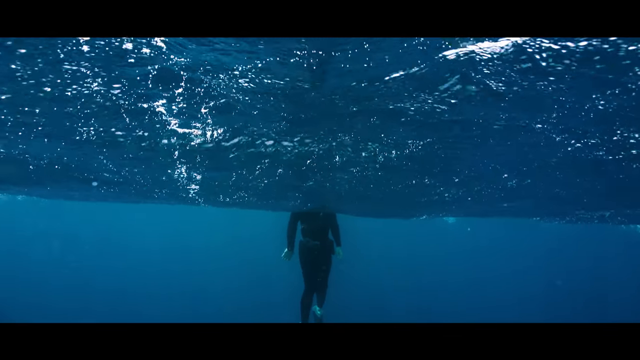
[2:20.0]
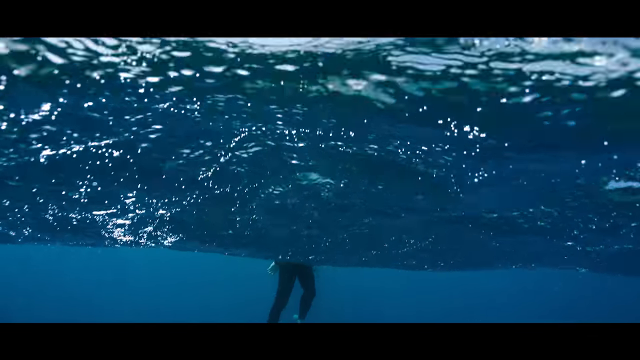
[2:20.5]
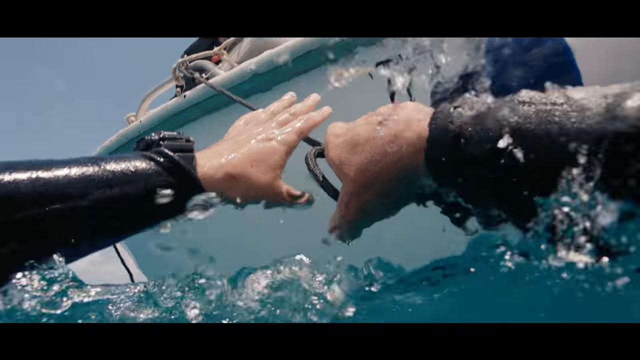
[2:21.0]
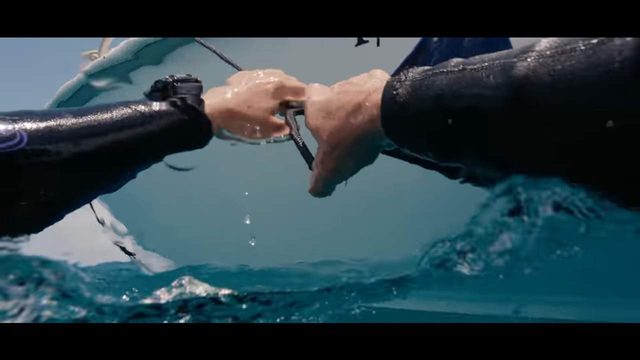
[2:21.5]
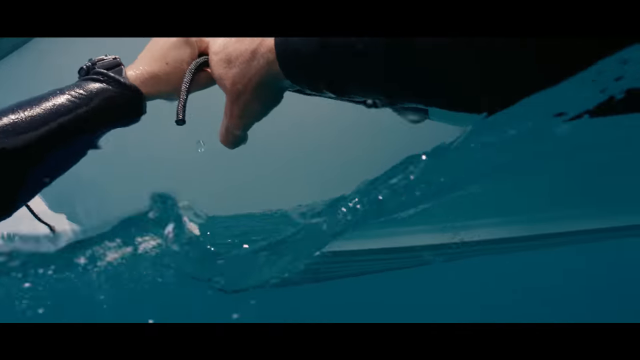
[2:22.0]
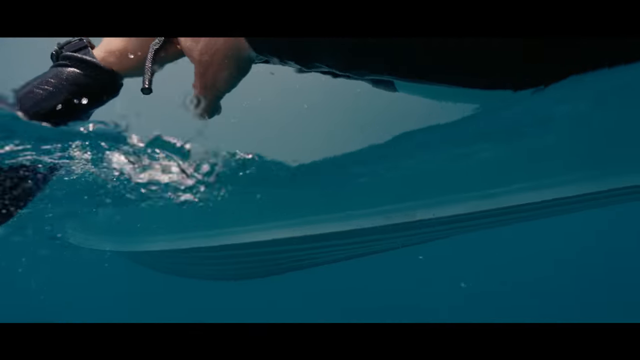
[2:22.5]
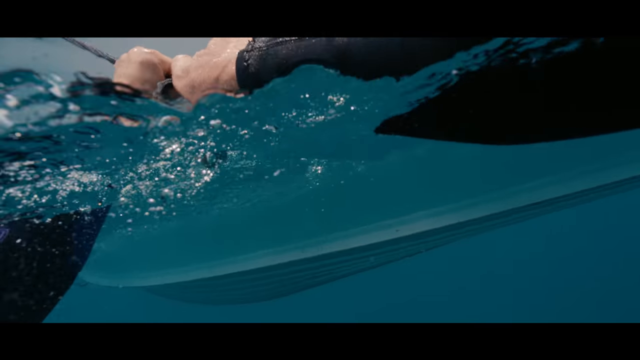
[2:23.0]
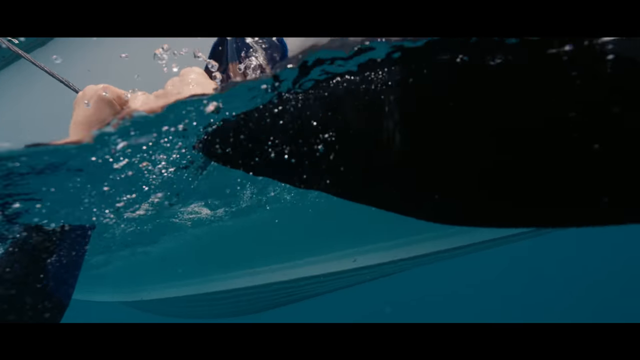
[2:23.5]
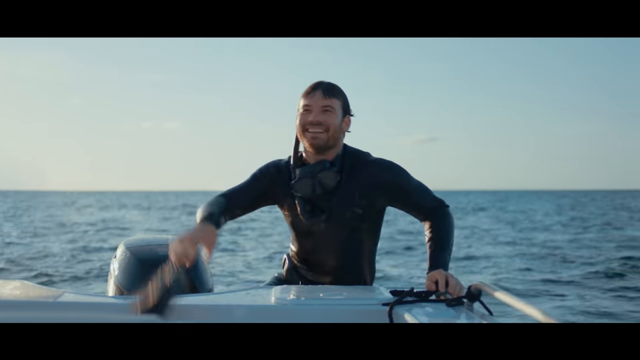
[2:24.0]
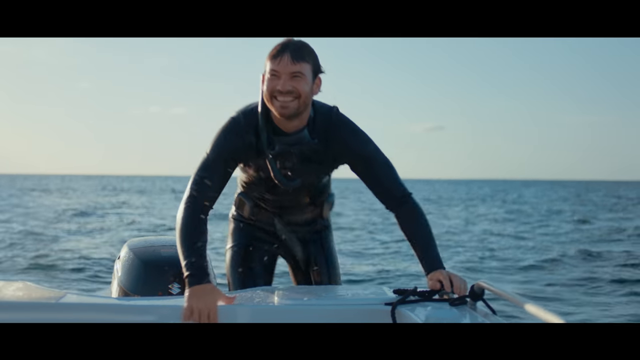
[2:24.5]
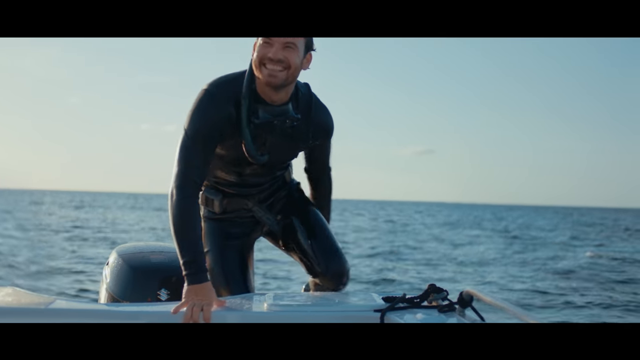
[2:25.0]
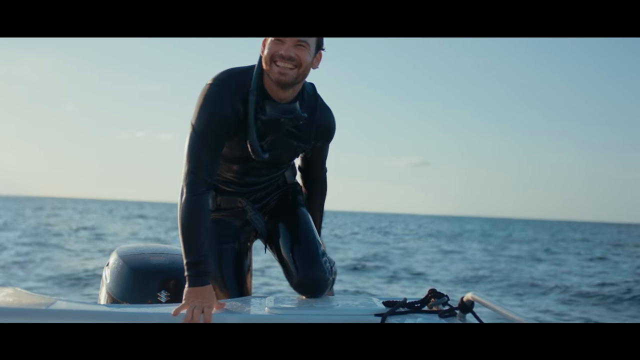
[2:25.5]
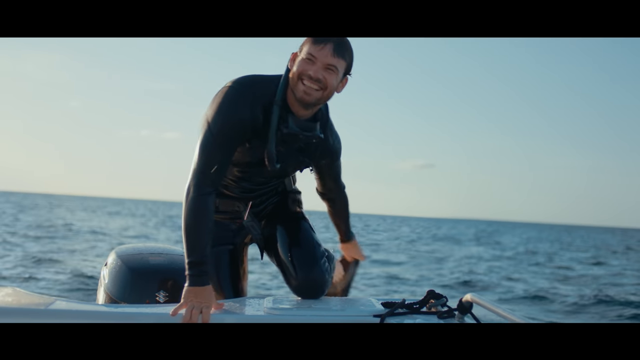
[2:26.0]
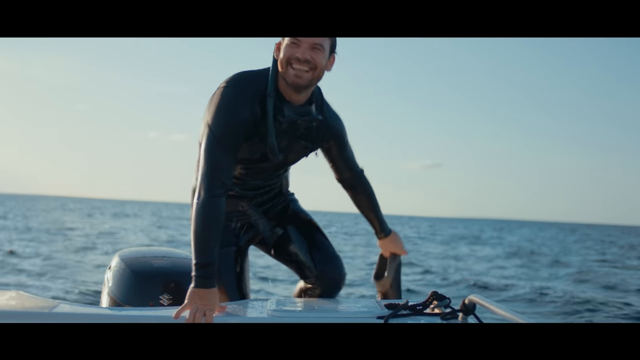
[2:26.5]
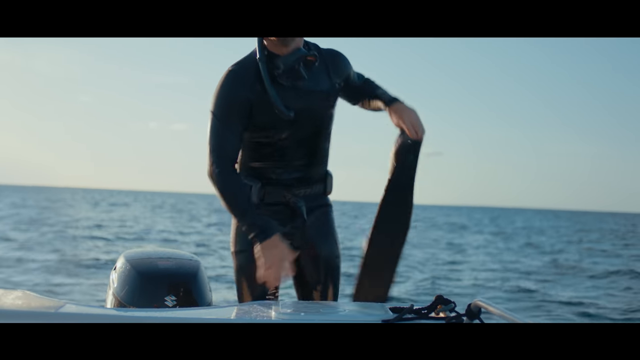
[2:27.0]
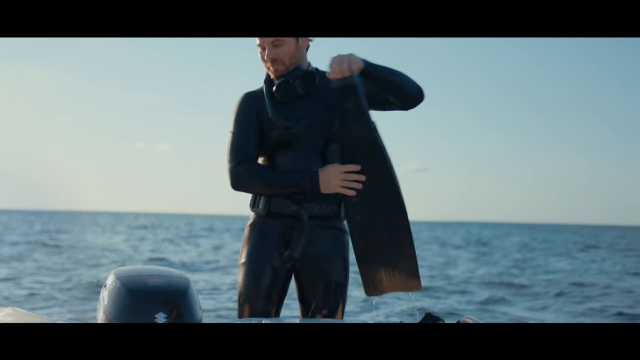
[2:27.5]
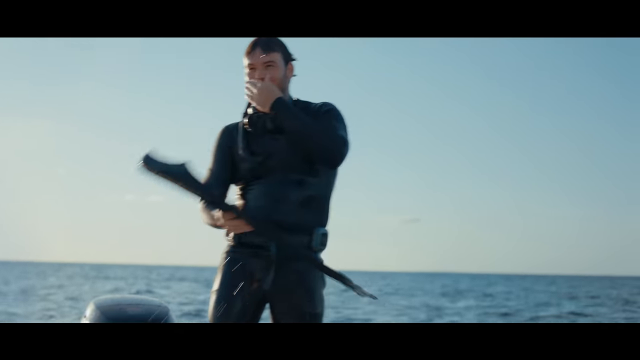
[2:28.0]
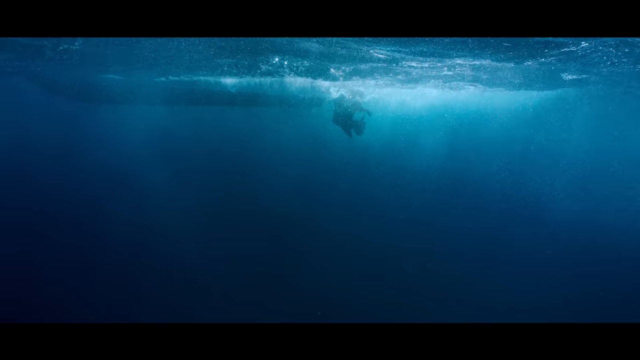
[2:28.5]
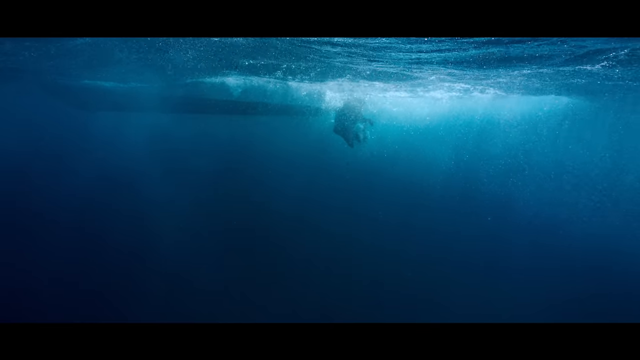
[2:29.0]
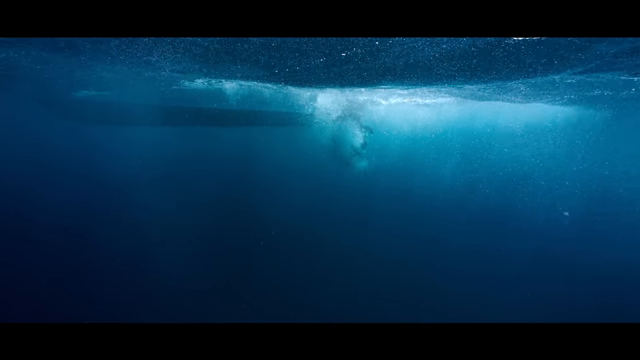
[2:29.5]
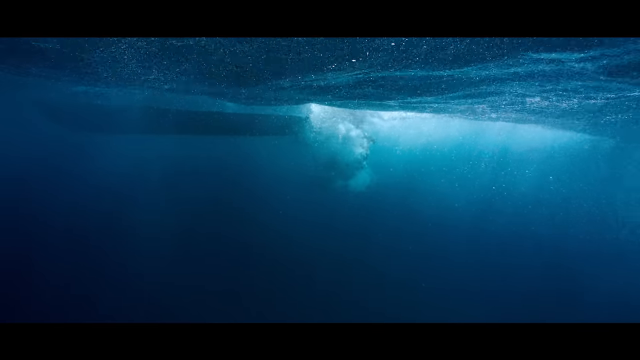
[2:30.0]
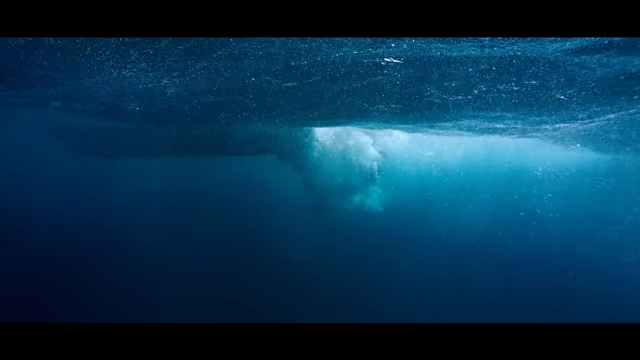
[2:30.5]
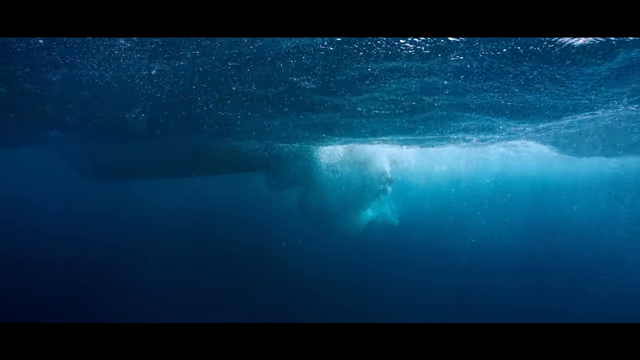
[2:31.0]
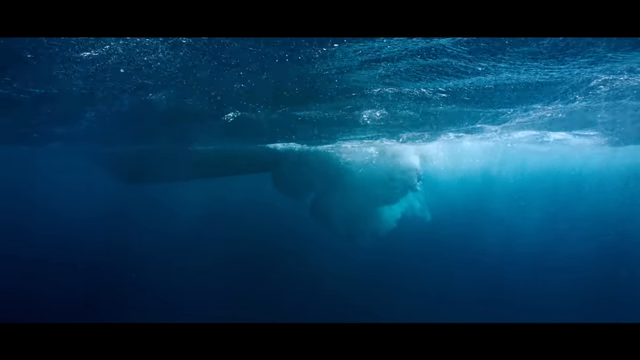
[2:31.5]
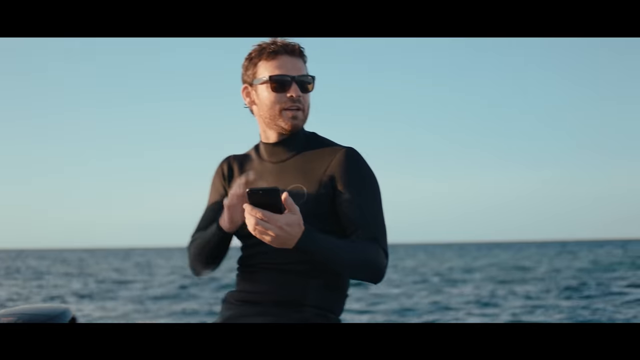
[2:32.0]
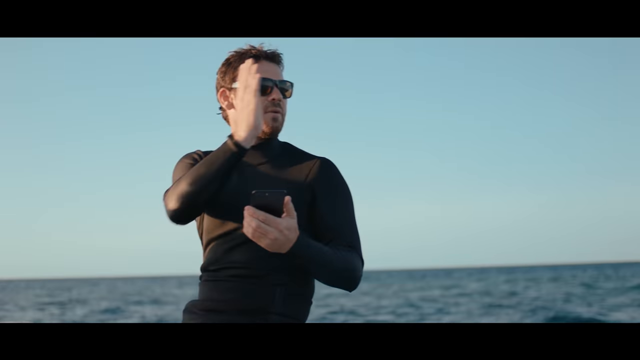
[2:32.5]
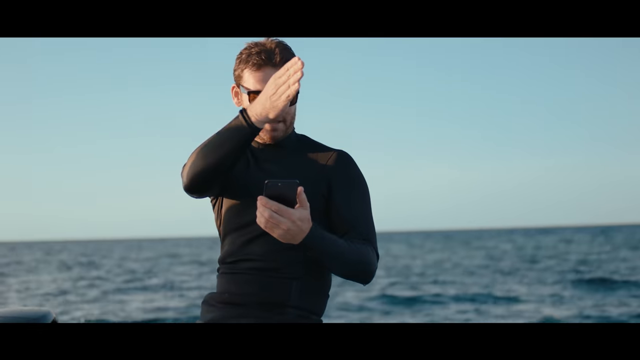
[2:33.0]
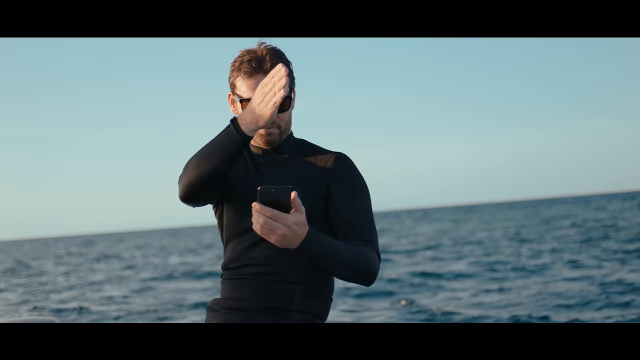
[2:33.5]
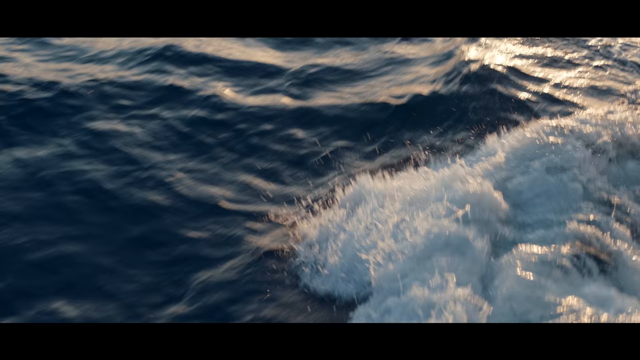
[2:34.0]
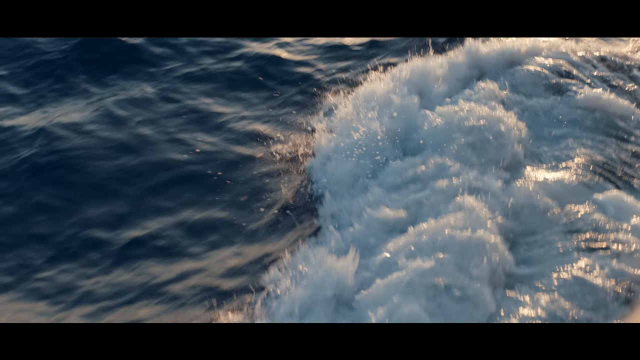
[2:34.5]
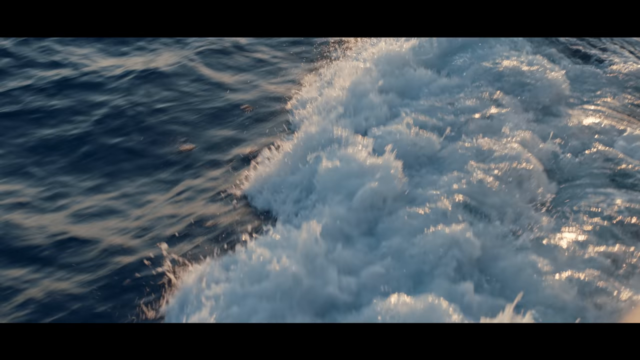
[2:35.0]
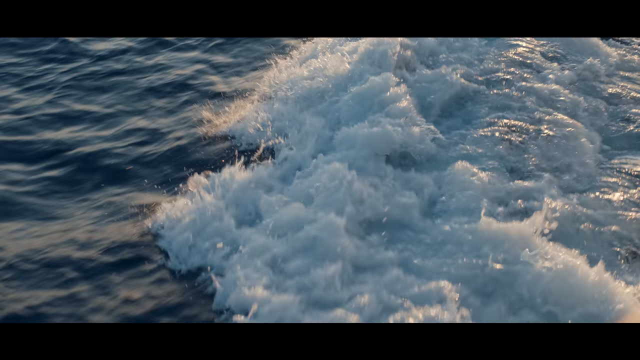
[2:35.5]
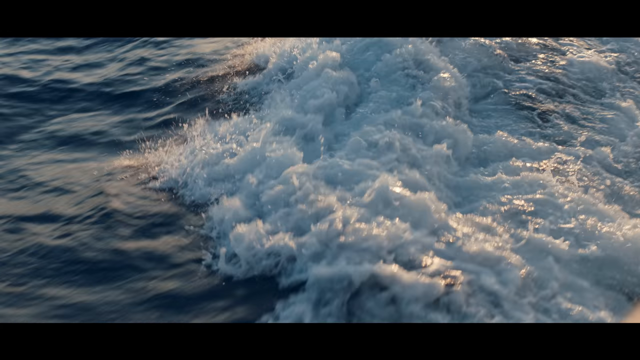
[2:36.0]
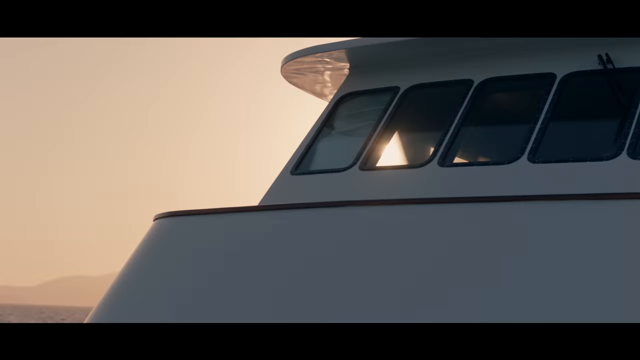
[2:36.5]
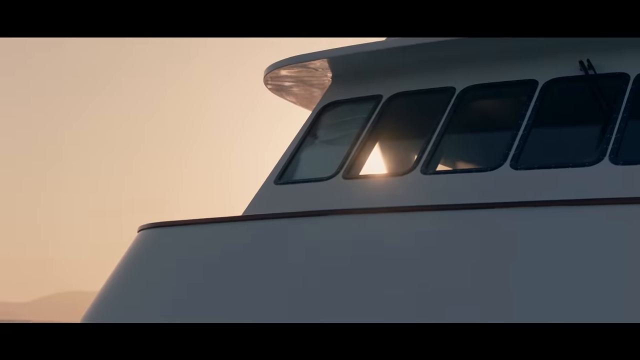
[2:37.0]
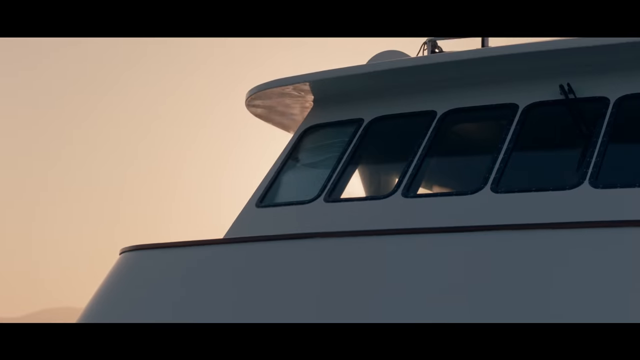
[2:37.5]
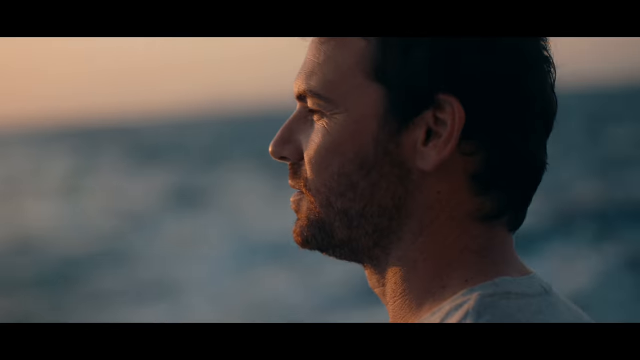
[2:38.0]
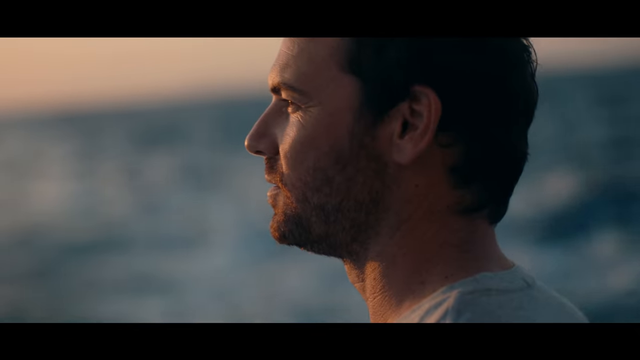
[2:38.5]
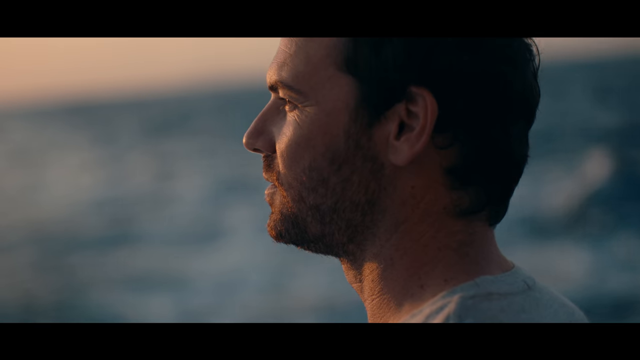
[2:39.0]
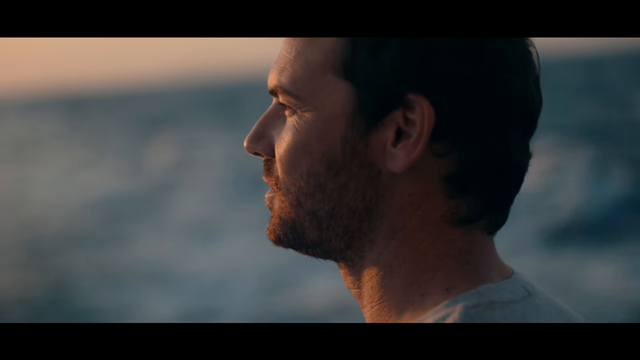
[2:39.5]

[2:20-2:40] A diver breaks the surface of the water, coming up to the white boat. He grabs hold of the rope and pulls himself up. He is a middle-aged Caucasian male with short brown hair and some beard scruff. He pulls off his long black swim flippers; he was wearing an eye mask and a snorkel. The underside of the boat in the water makes bubbles, and then the boat's wake is visible as it drives through the water, going to the larger ship it was launched from. The same diver is then shown dry in civilian clothing, wearing a light gray t-shirt, presumably talking about the diving. The small boat is white with a black motor and black roping, and it looks like it accommodates two to four people comfortably. The sky is bright blue in daytime, with no clouds visible.